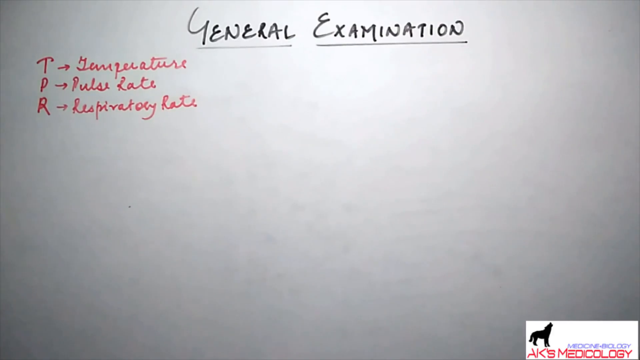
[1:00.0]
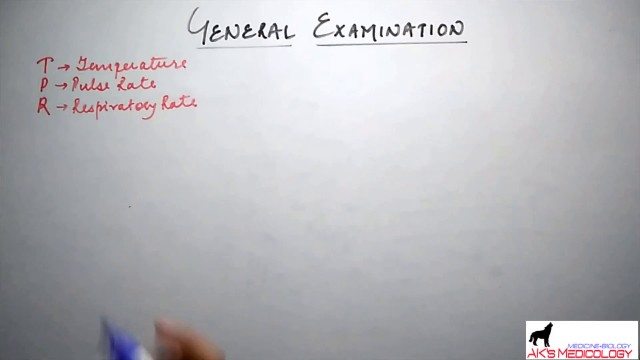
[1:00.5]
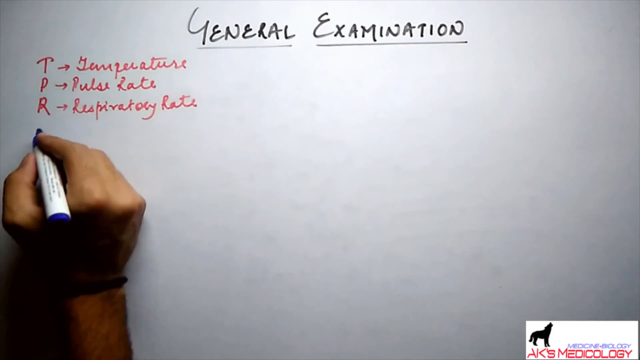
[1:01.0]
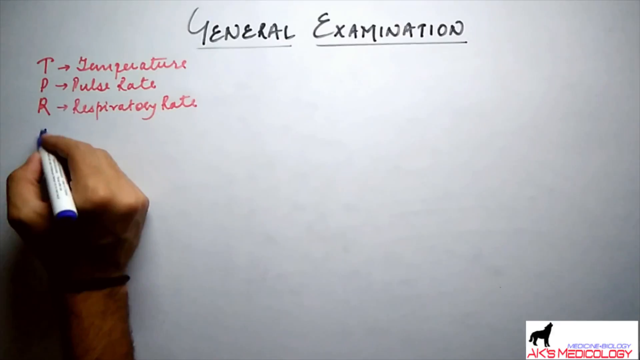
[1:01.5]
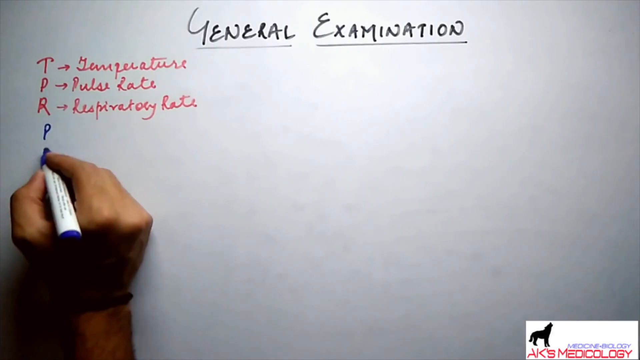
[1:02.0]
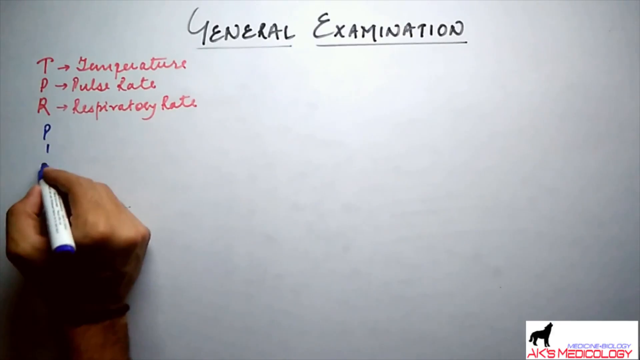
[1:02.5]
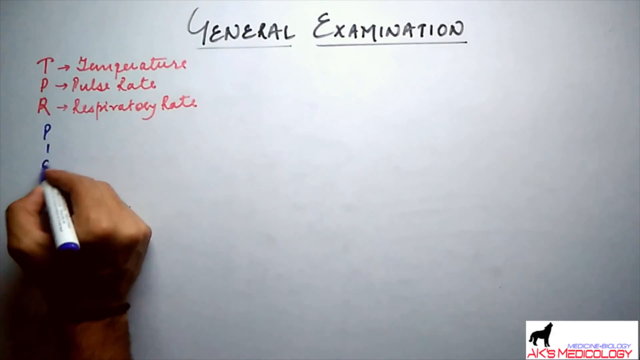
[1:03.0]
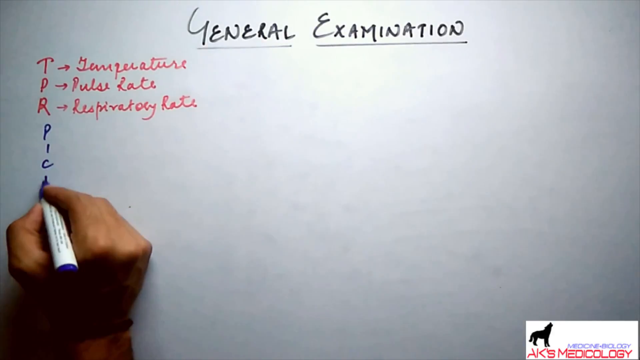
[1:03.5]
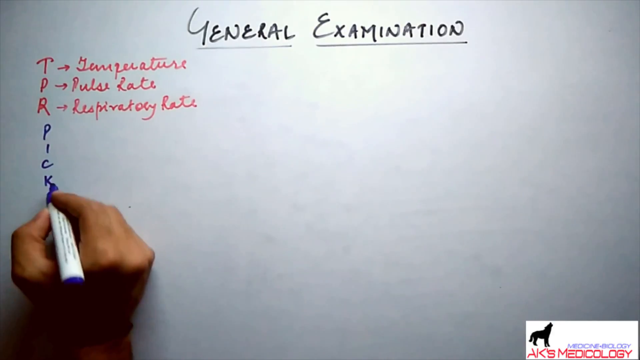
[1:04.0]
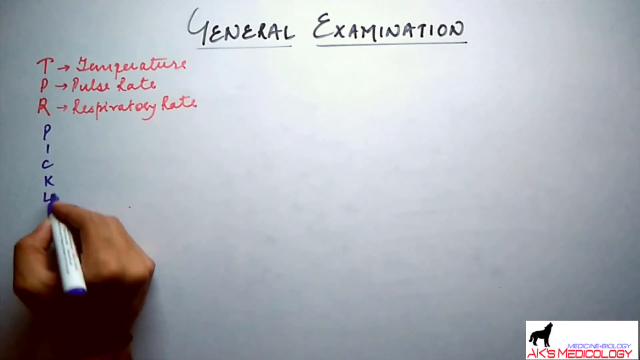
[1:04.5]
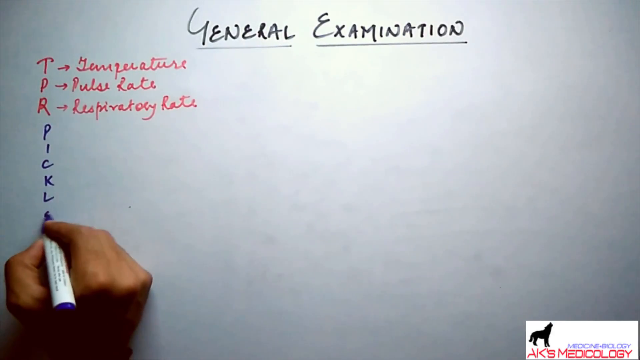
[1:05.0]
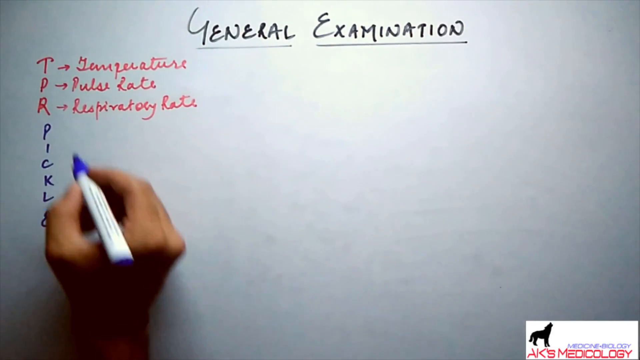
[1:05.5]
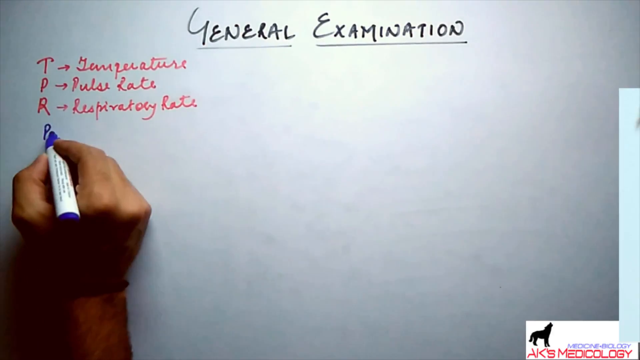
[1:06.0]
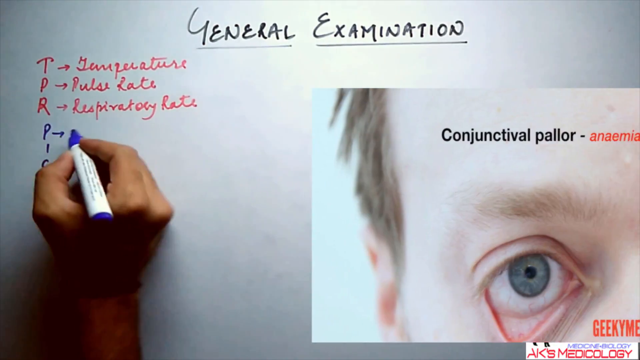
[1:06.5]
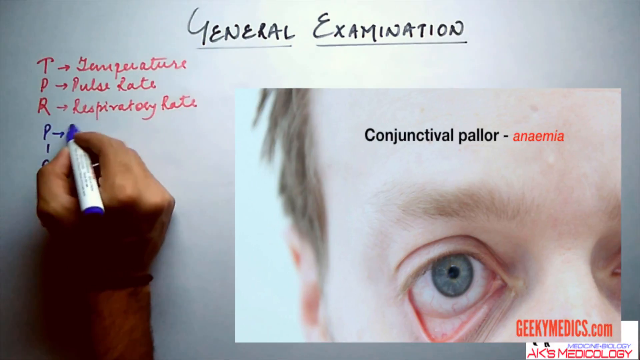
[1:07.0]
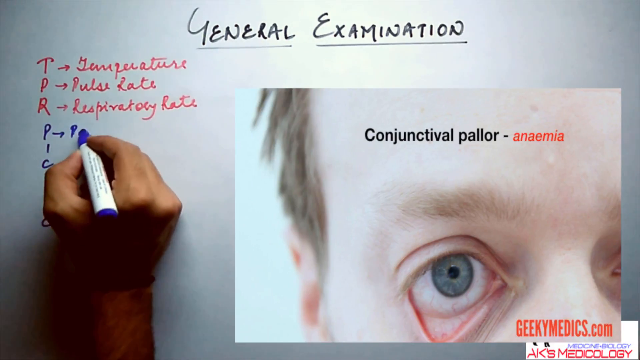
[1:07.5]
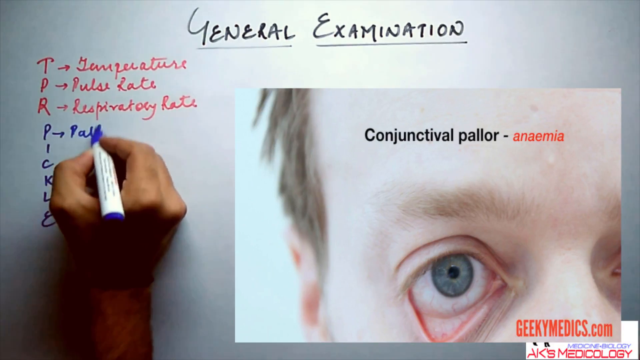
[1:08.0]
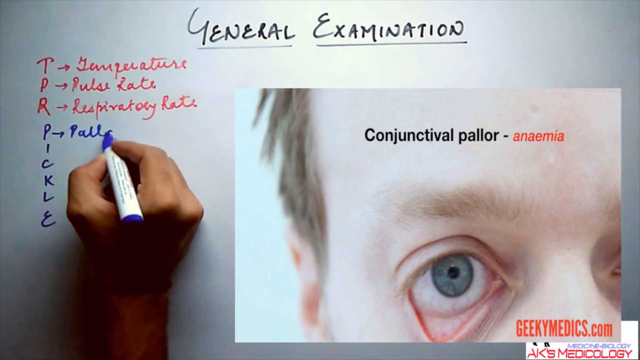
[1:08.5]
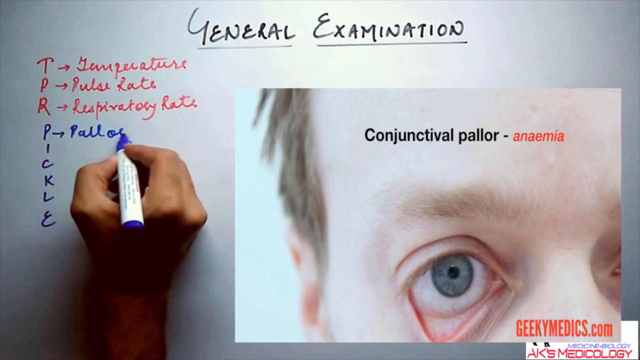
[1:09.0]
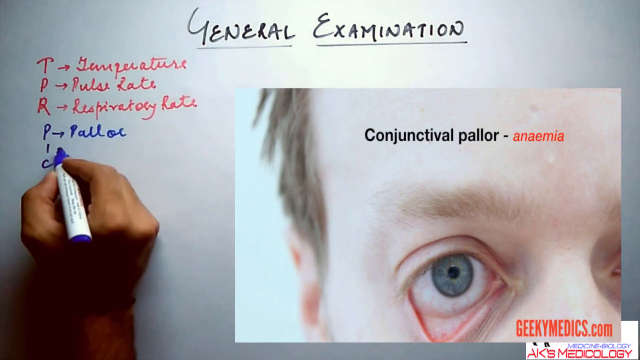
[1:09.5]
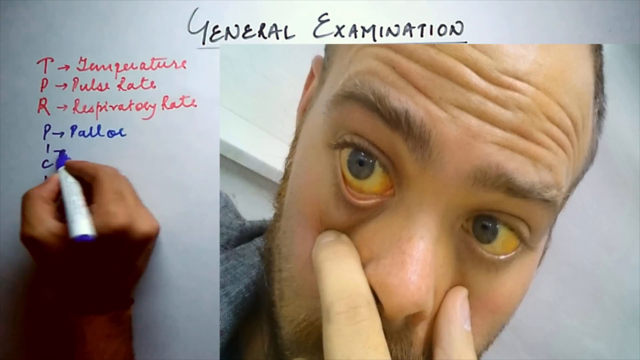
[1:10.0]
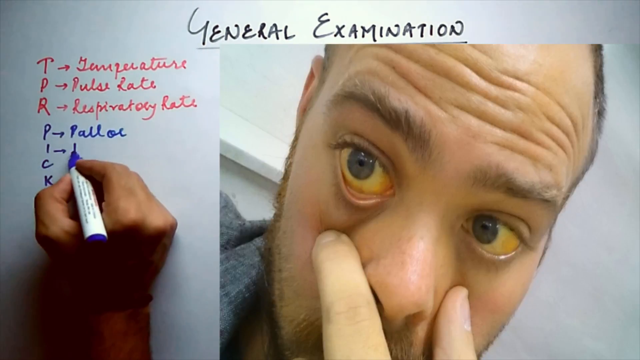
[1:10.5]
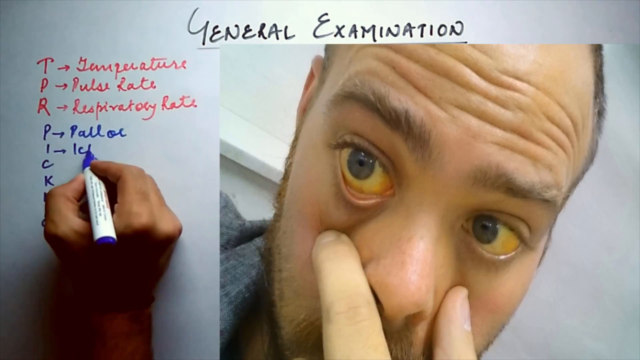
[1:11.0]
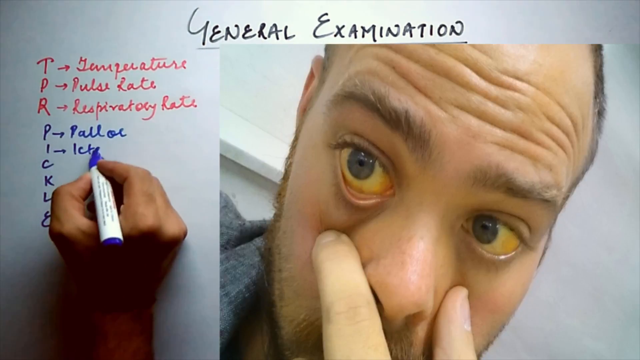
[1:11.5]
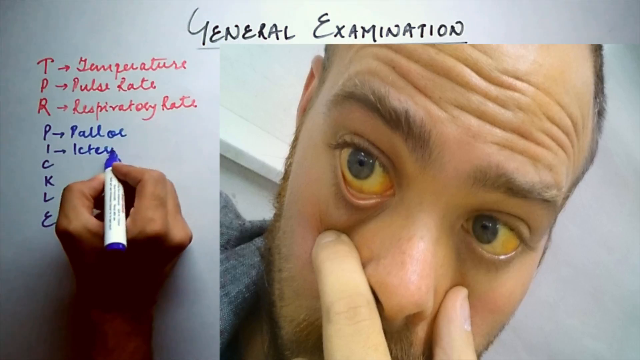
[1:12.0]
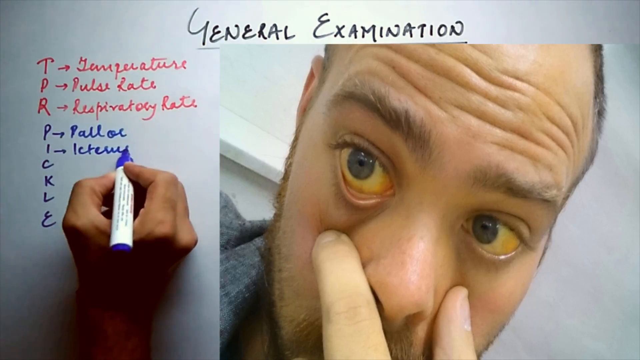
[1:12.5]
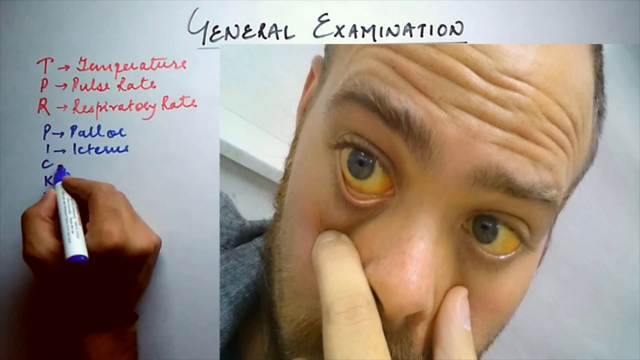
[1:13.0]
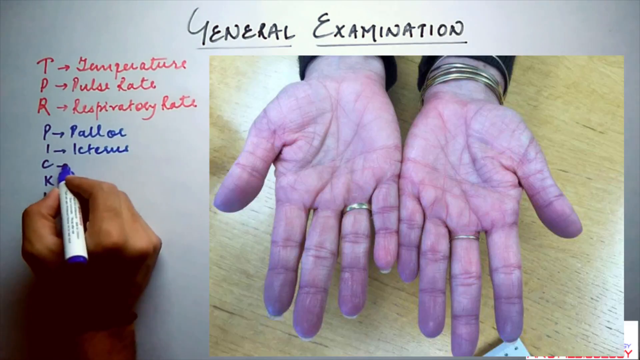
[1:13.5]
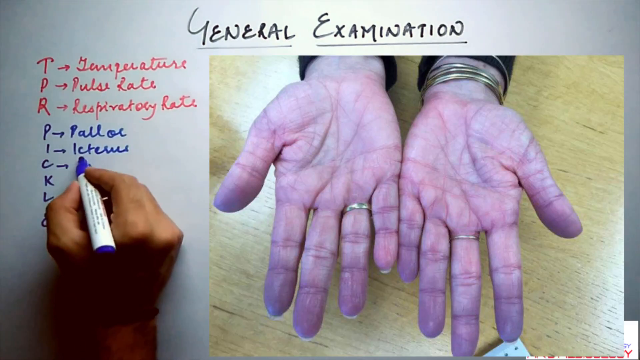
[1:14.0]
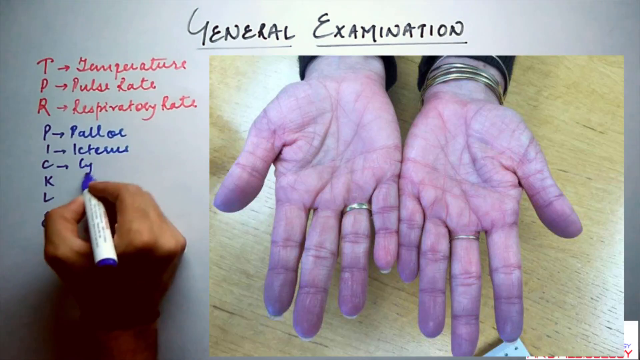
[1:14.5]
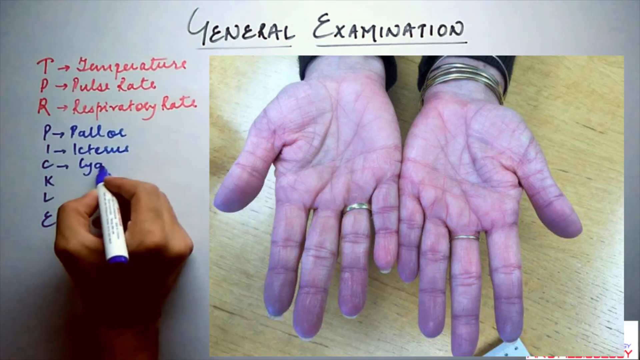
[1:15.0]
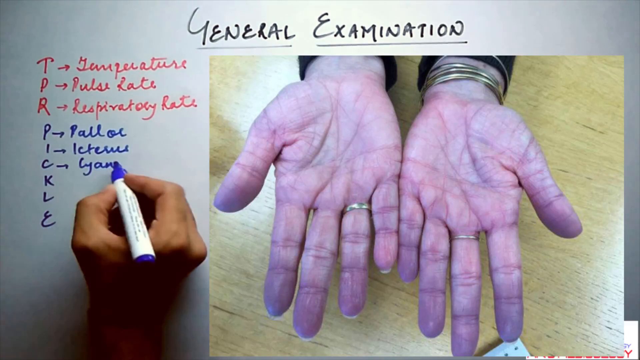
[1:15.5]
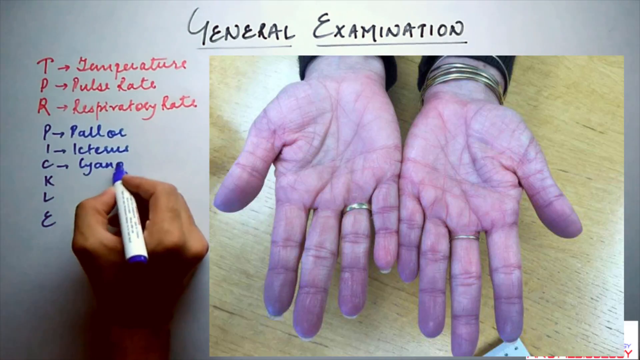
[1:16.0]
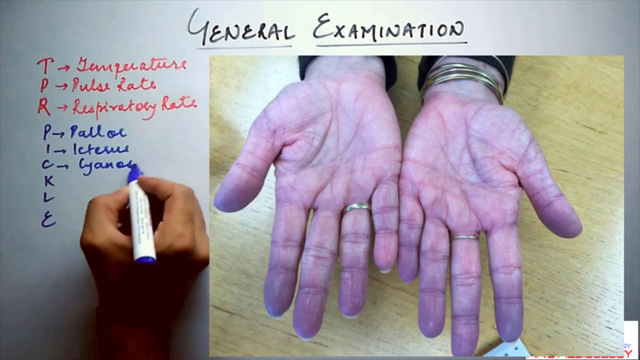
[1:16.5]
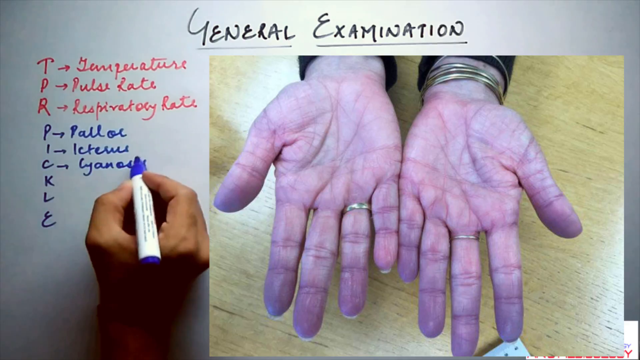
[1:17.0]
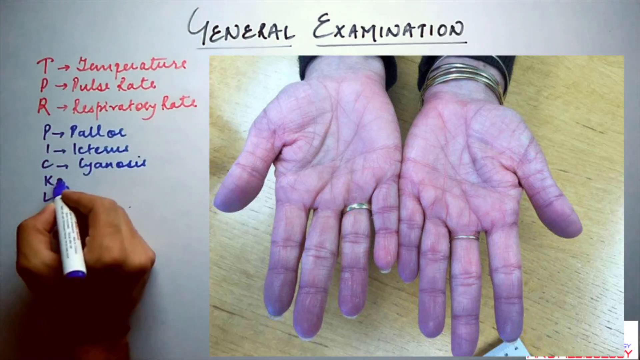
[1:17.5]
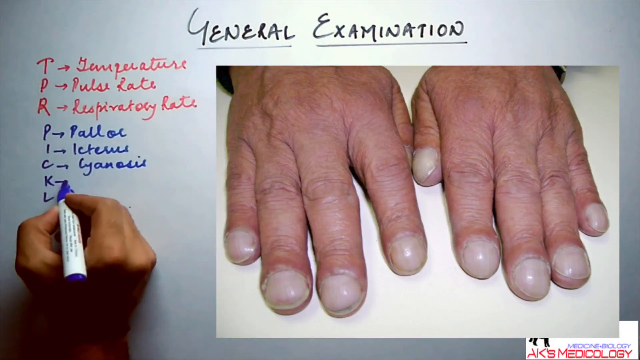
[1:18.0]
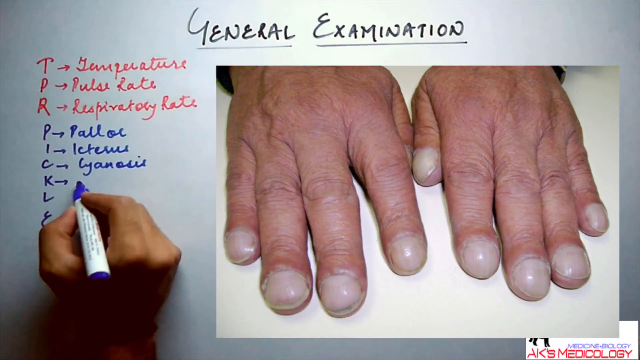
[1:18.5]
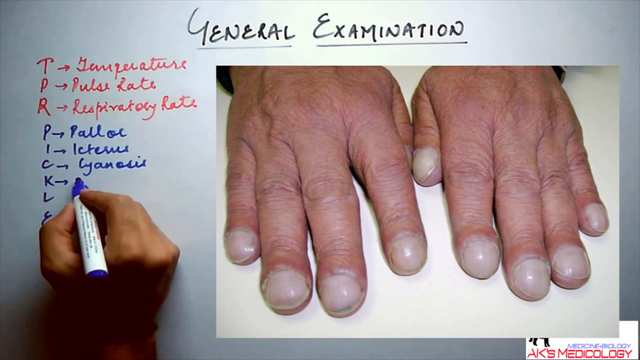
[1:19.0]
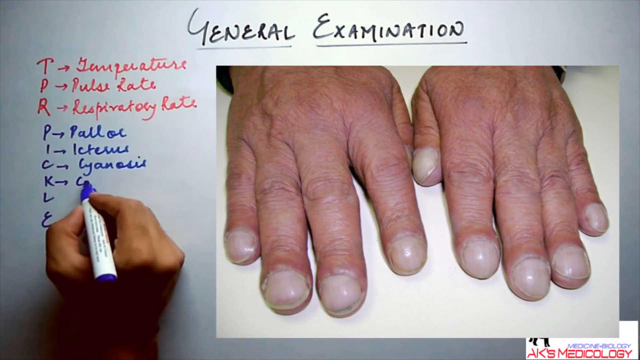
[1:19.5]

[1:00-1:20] The whiteboard has "general examination" written at the top. On the left side, the letters TPR are written in red, with T for temperature, P for pulse rate and R for respiratory rate. Letters in blue ink spell P-I-C-K-L-E, "pickle," and words are written beside each letter, though they are not legible. As each word is written, pictures appear: eyes, hands, a person with swollen fingernails, a person with yellow in their eyes, and a person with red eyes.